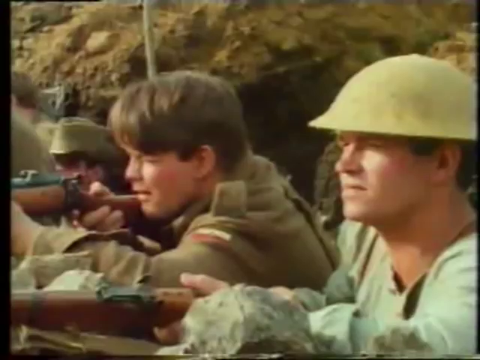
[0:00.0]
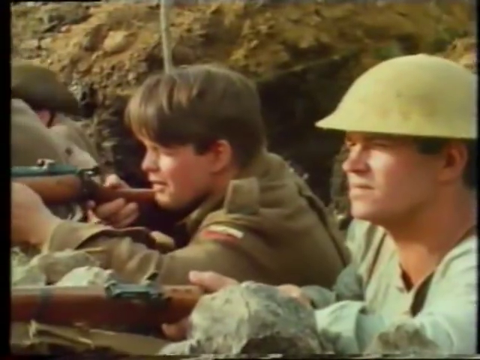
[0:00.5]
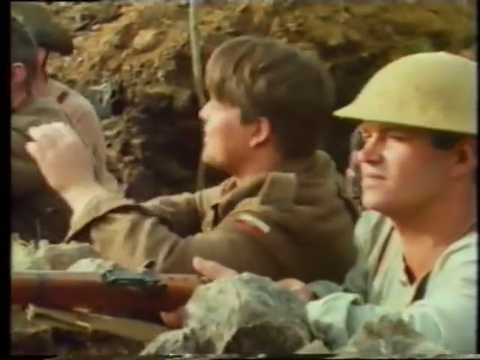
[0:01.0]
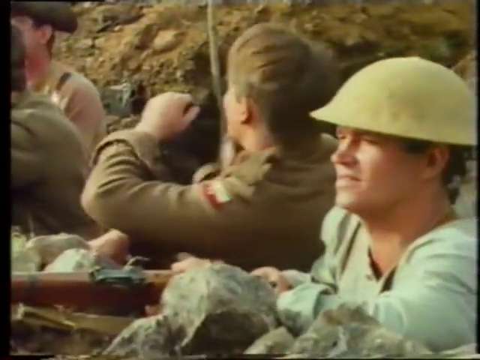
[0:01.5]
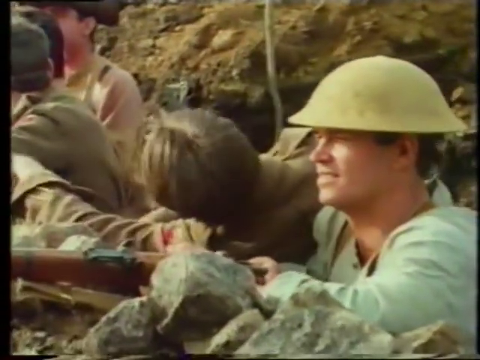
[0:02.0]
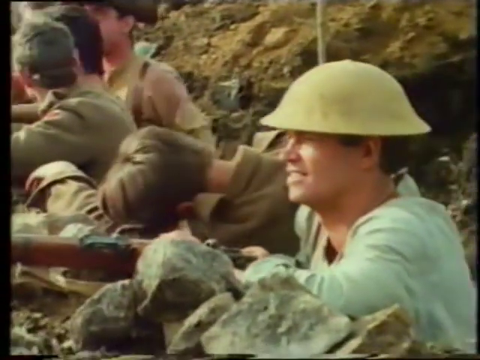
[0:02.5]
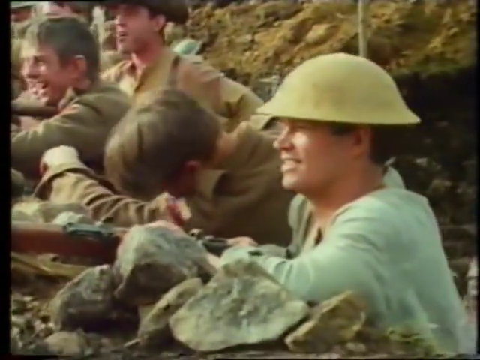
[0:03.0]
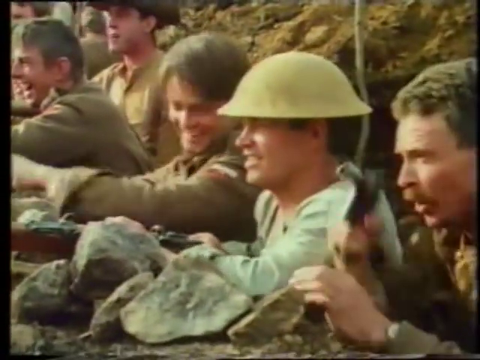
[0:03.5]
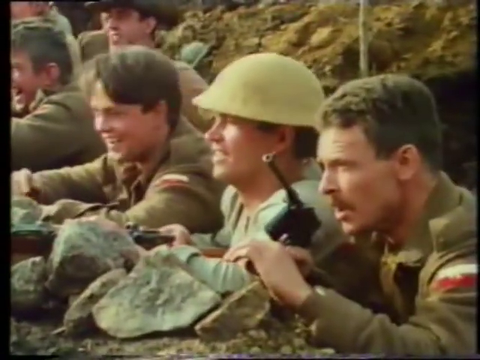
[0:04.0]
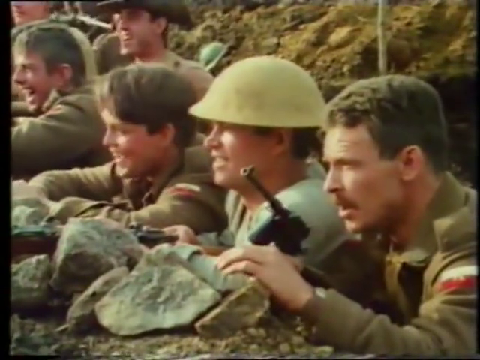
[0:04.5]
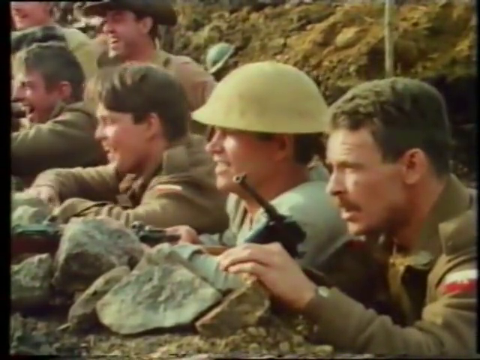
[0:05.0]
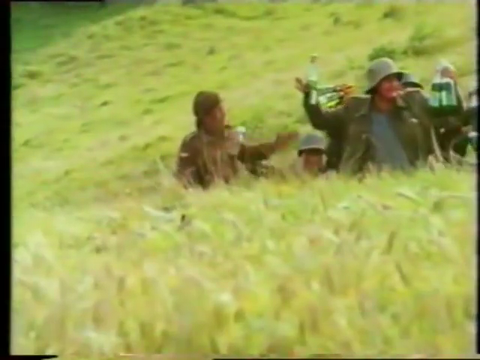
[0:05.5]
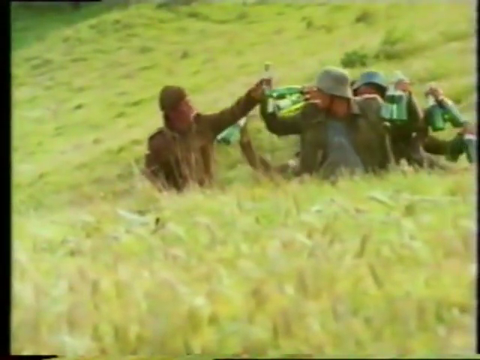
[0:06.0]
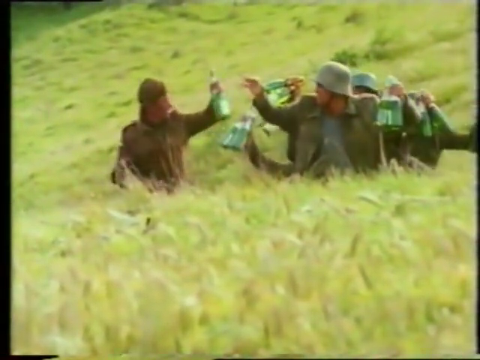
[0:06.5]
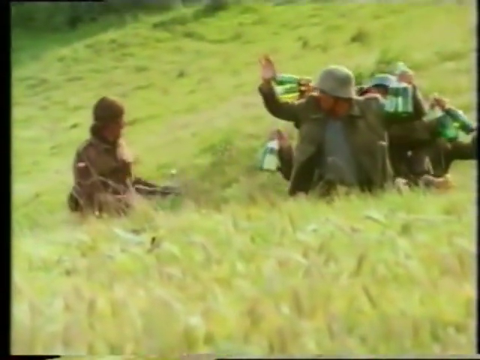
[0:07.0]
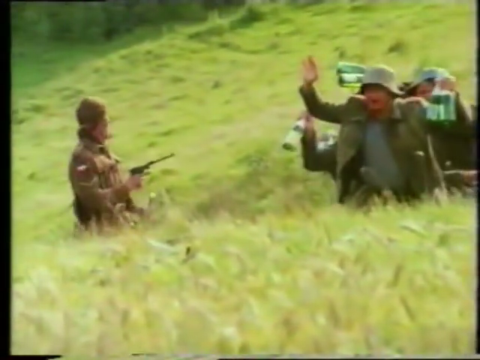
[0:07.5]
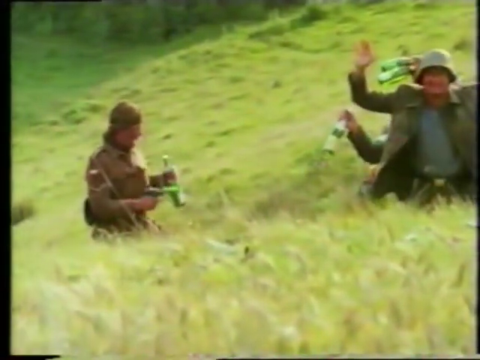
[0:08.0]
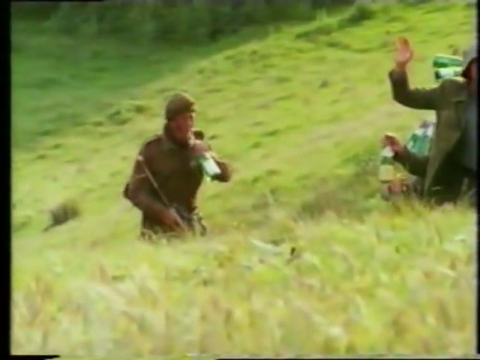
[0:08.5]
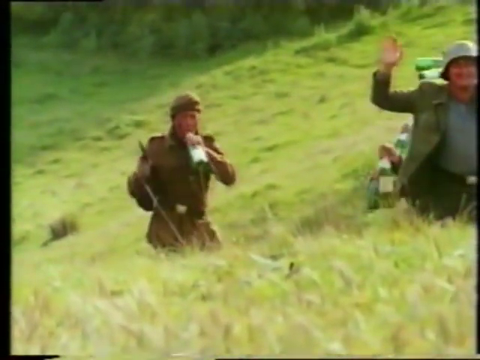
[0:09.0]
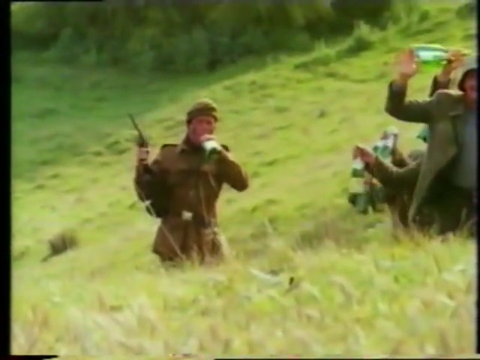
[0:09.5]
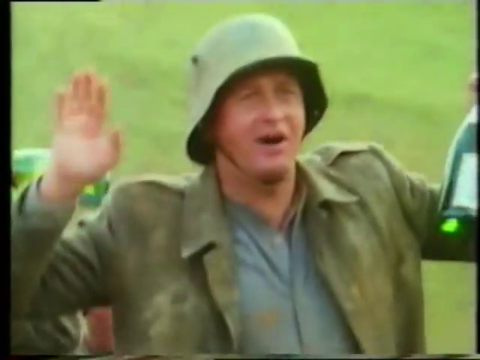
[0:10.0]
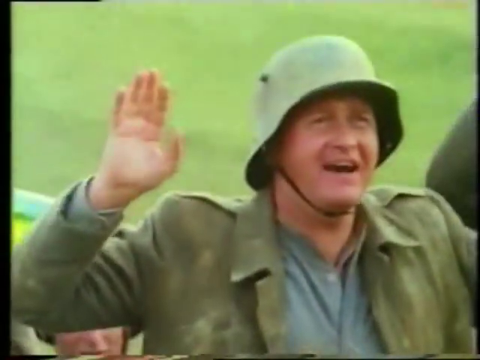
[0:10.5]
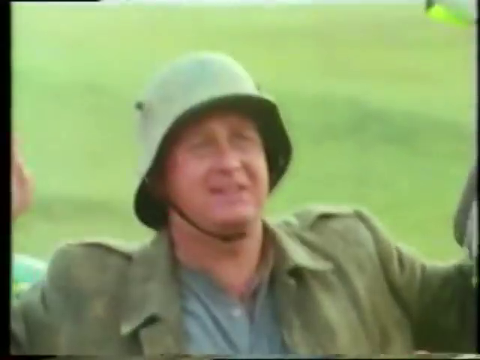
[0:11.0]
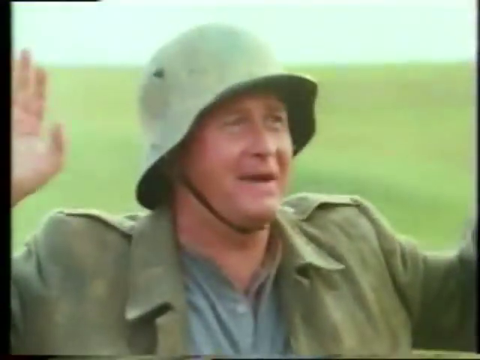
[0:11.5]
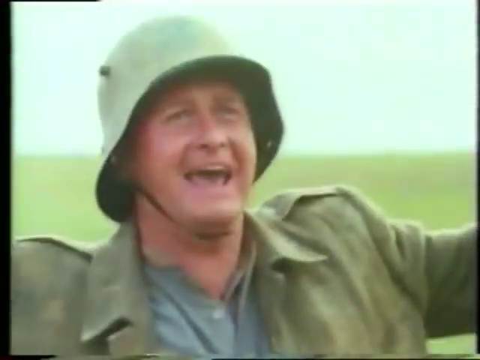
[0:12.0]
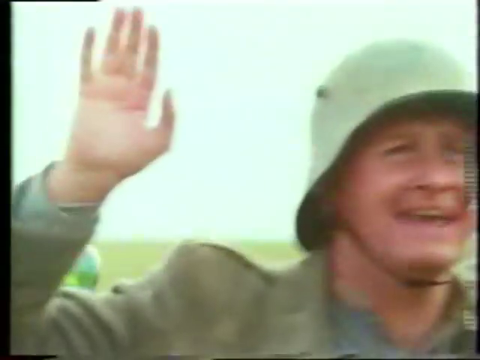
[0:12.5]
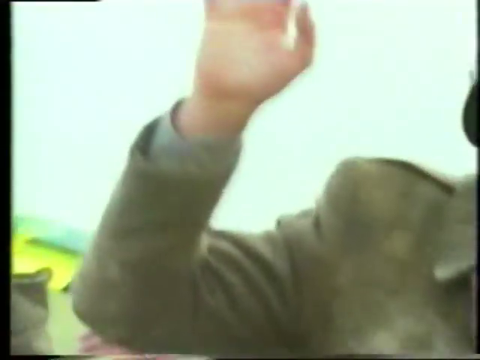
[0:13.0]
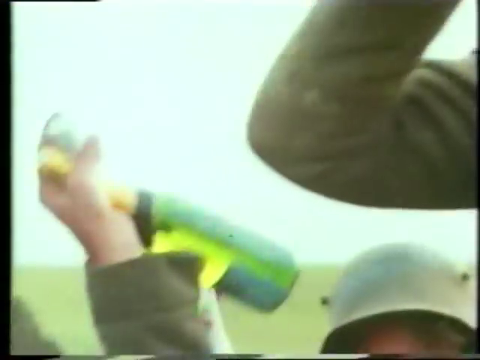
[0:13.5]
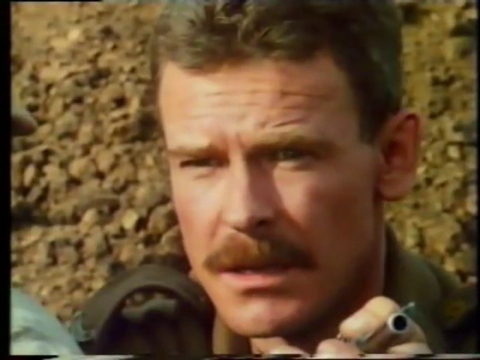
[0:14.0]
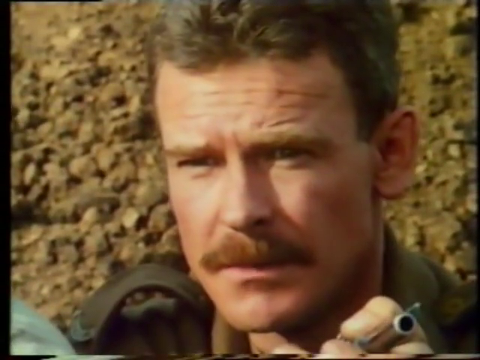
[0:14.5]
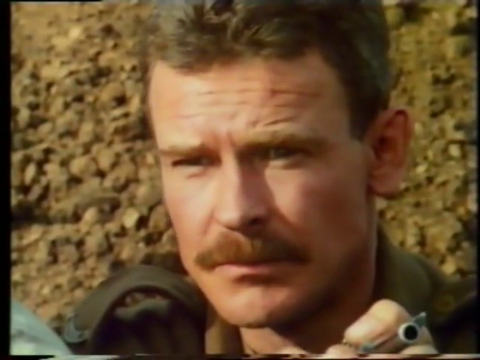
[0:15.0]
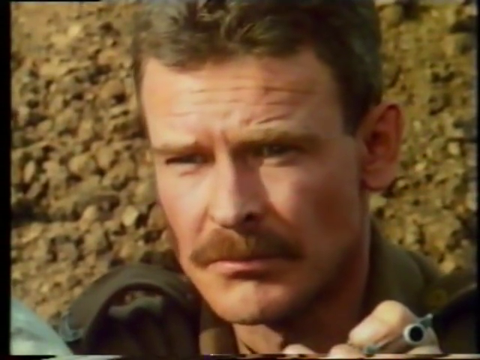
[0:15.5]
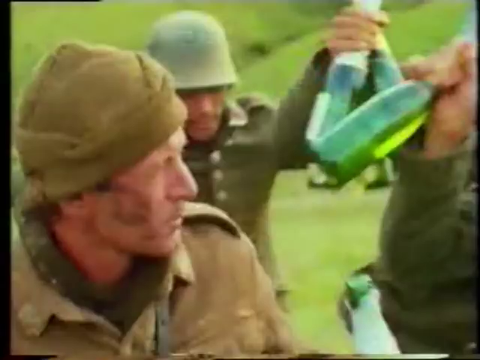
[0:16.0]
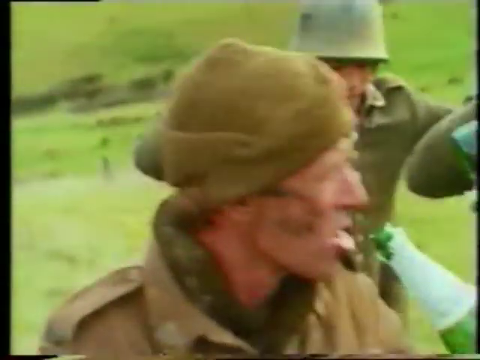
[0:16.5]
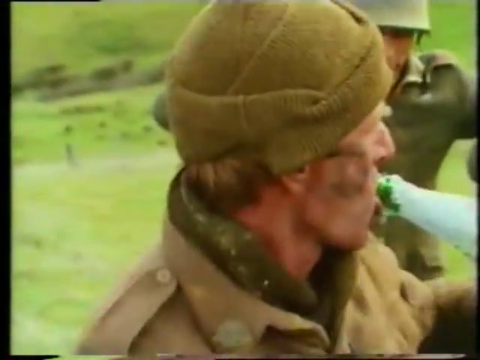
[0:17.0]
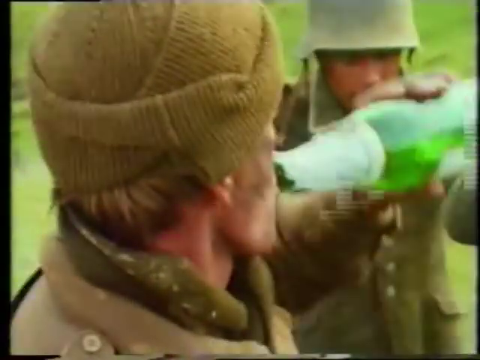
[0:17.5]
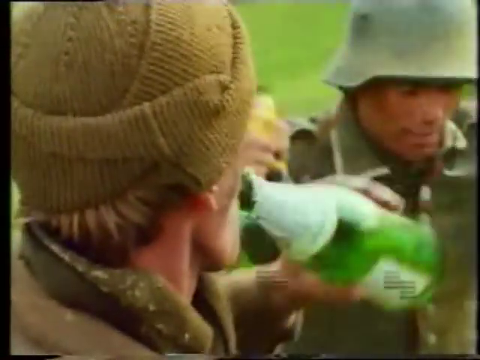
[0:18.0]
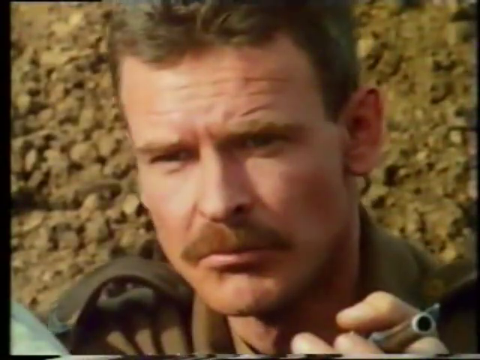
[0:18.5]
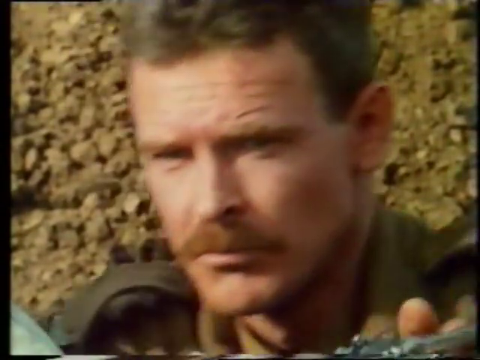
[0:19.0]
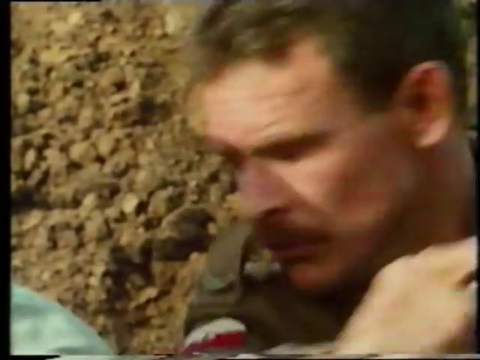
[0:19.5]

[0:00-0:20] A group of men, apparently about three, carry guns and aim at something. A group of men carrying alcohol walk through grassland, drinking their beer as they go. The armed men in the grassland take aim at them, but the moment they see the drunk men they give up, and their facial expressions change to disappointment. One of the men tries to leave the scene. The armed men hide out where they stand, focusing their guns toward the drunken men. Some wear helmets while some do not; some wear caps and one wears a beanie. One of the men raises his hand up toward the sky. Some have mud on their faces. The men aiming at the drunks are all white men.